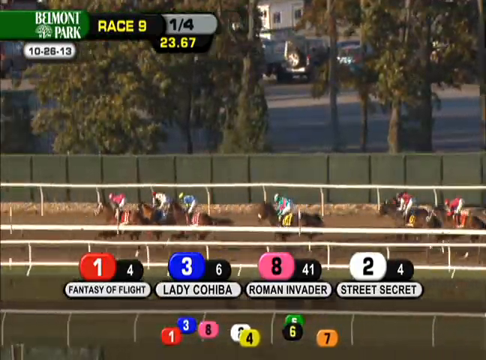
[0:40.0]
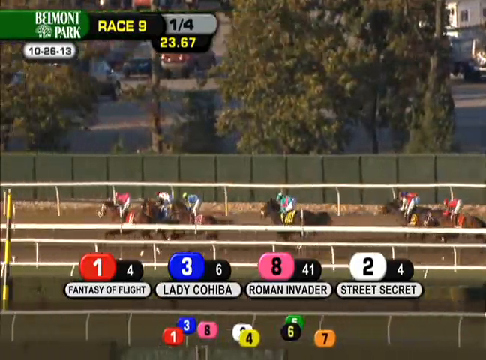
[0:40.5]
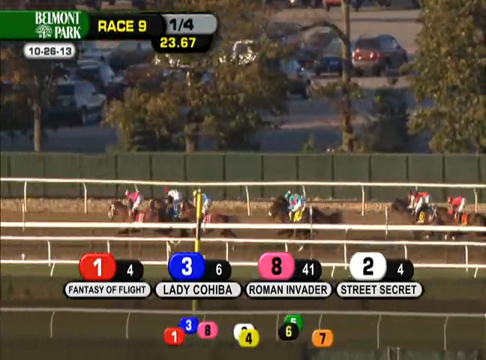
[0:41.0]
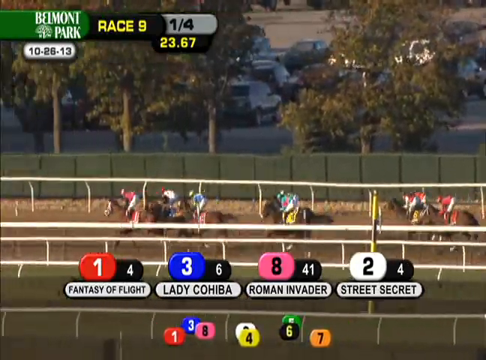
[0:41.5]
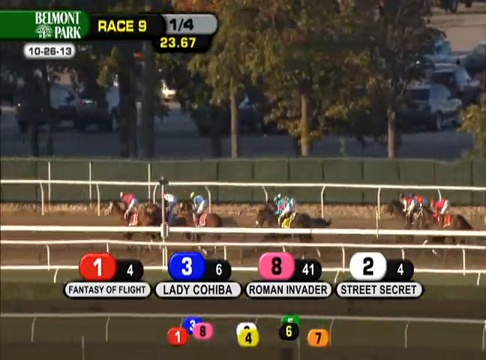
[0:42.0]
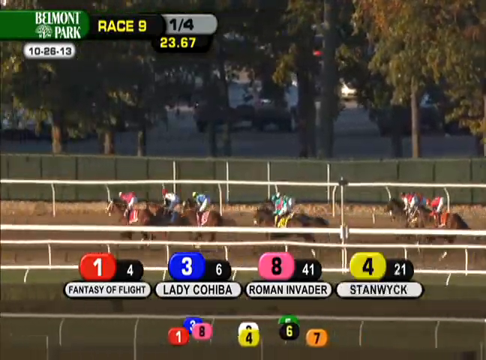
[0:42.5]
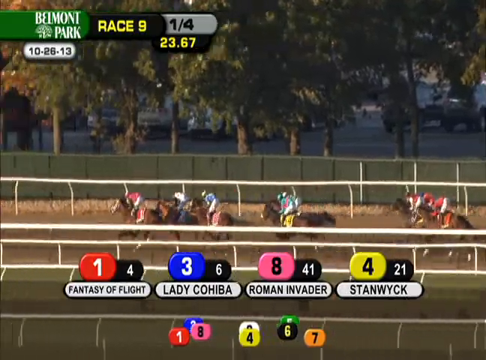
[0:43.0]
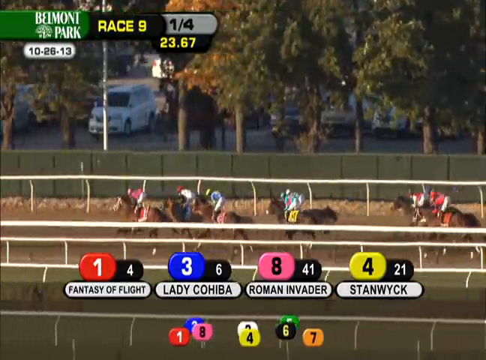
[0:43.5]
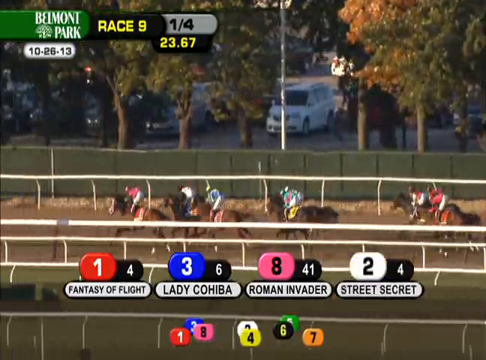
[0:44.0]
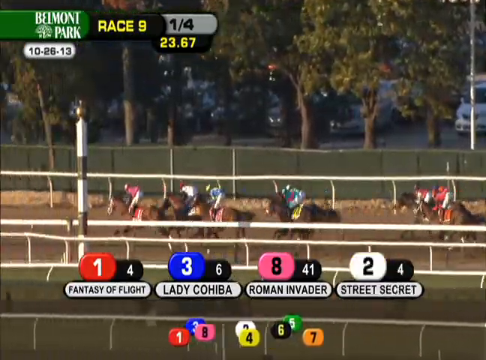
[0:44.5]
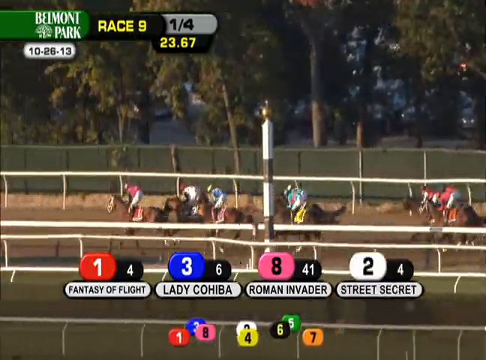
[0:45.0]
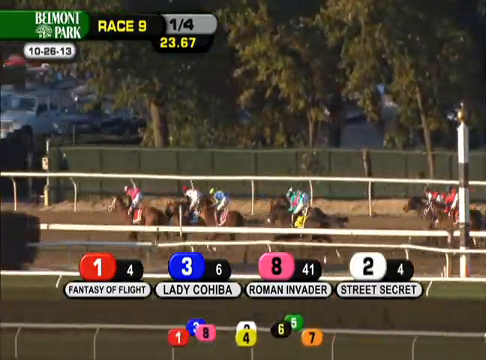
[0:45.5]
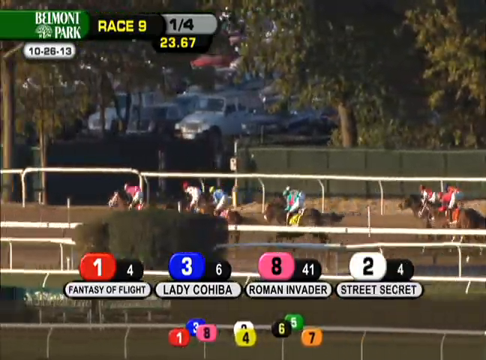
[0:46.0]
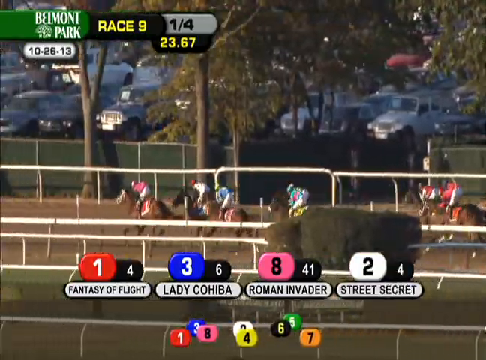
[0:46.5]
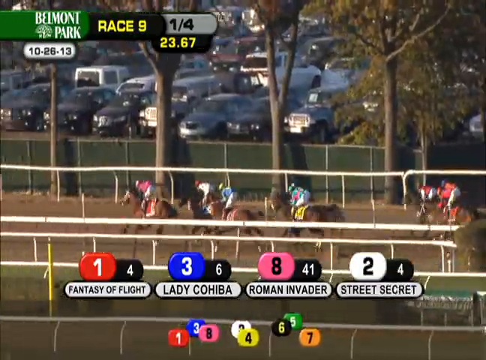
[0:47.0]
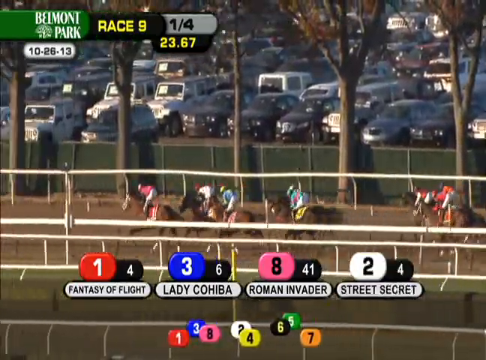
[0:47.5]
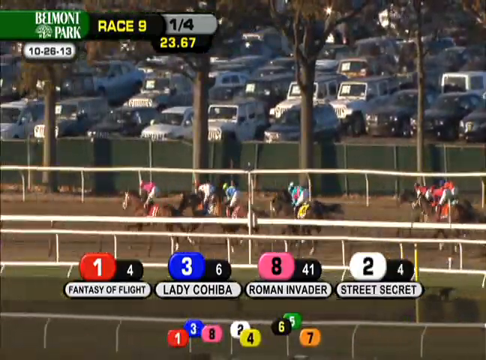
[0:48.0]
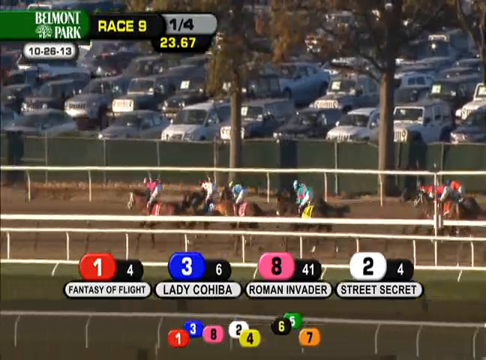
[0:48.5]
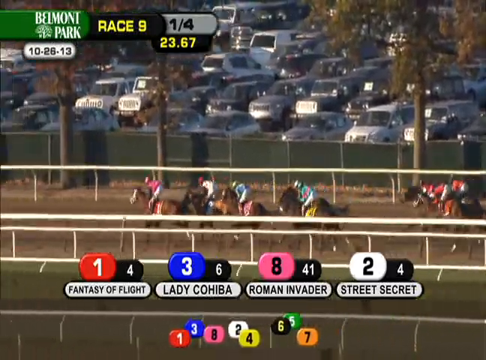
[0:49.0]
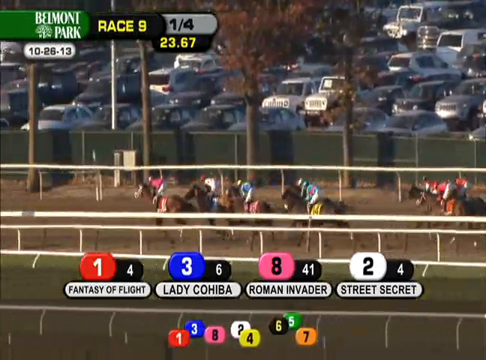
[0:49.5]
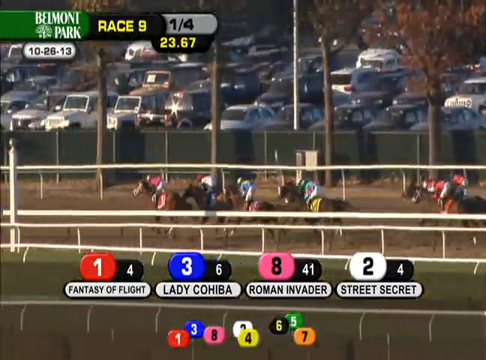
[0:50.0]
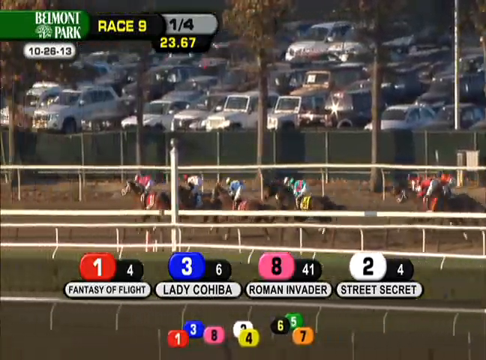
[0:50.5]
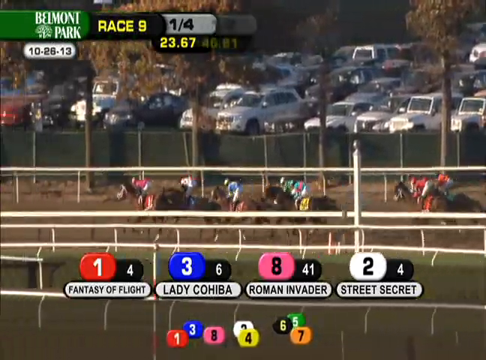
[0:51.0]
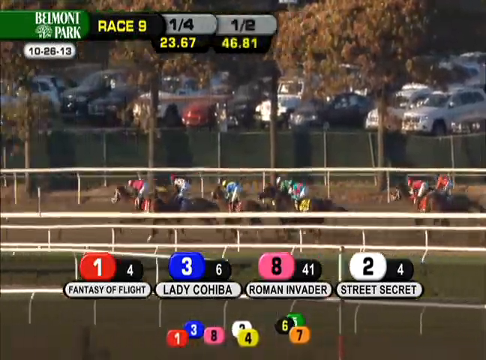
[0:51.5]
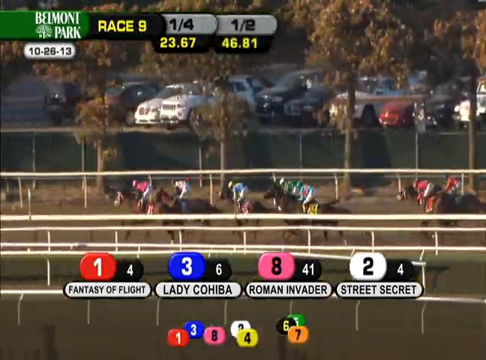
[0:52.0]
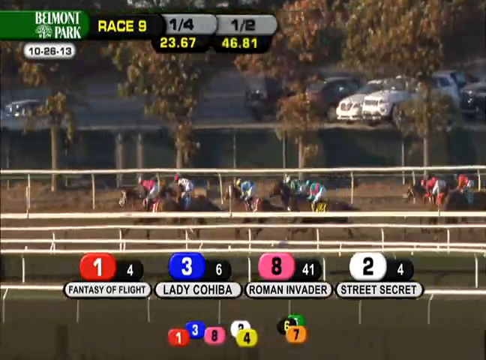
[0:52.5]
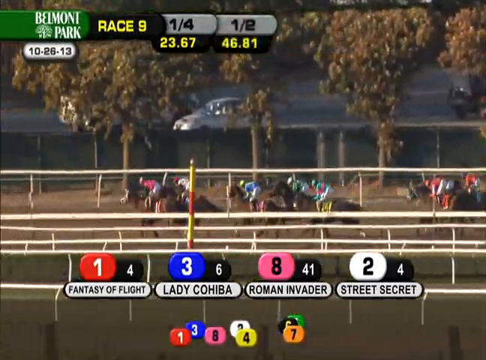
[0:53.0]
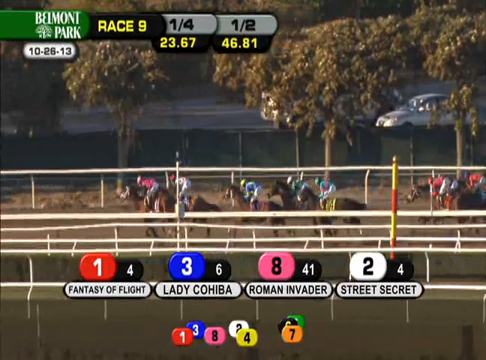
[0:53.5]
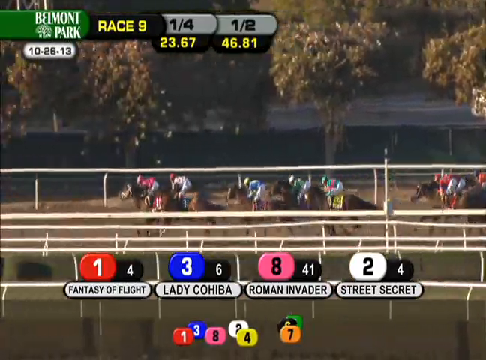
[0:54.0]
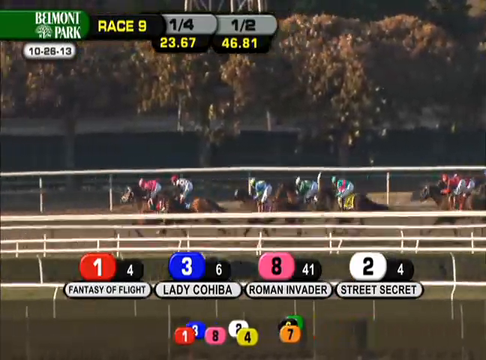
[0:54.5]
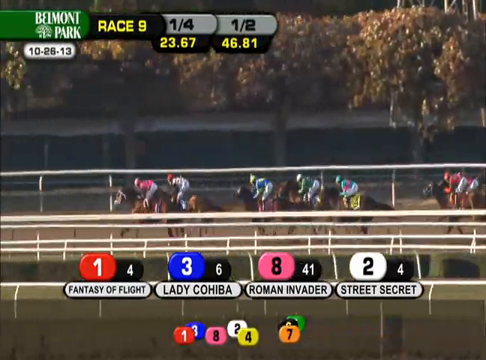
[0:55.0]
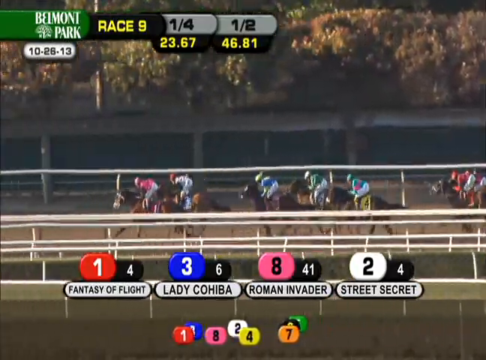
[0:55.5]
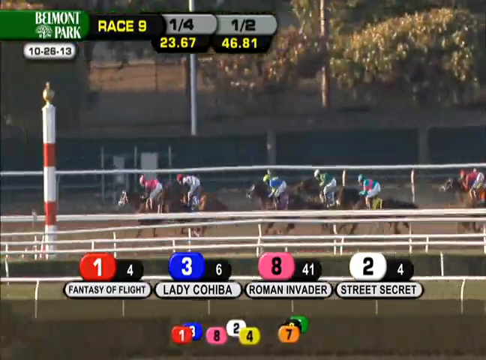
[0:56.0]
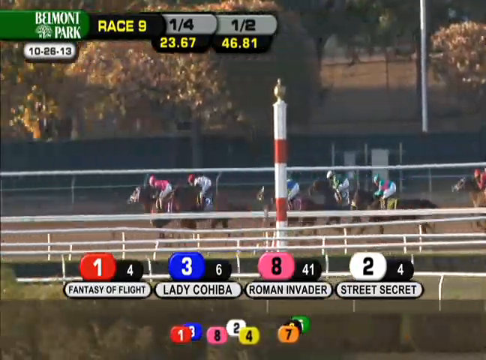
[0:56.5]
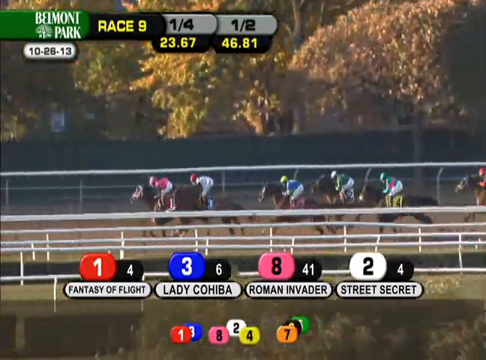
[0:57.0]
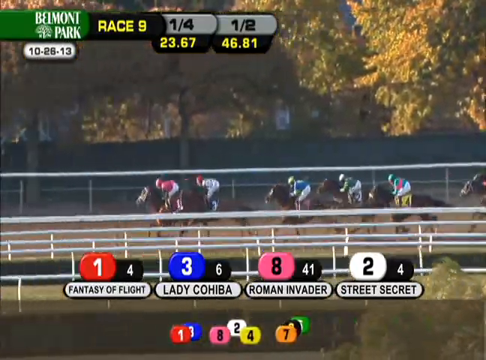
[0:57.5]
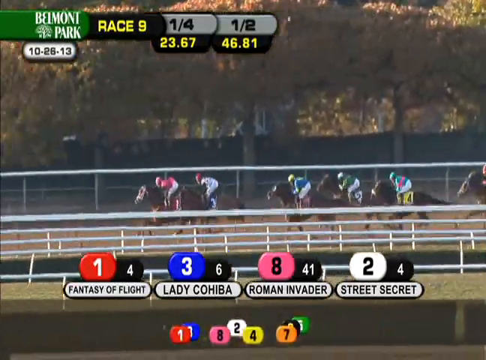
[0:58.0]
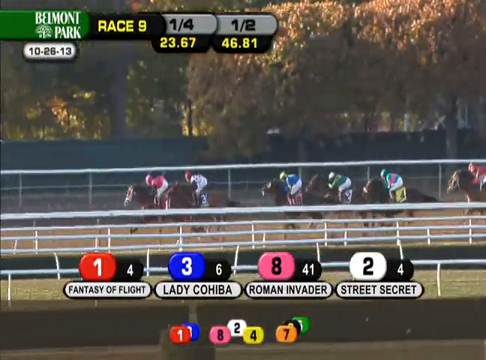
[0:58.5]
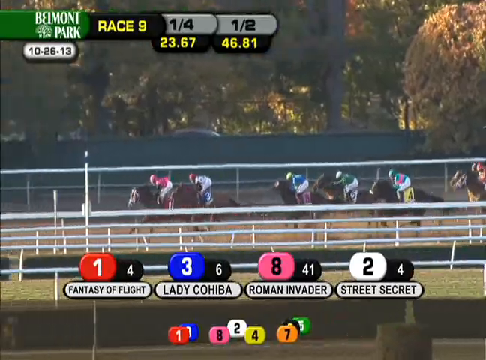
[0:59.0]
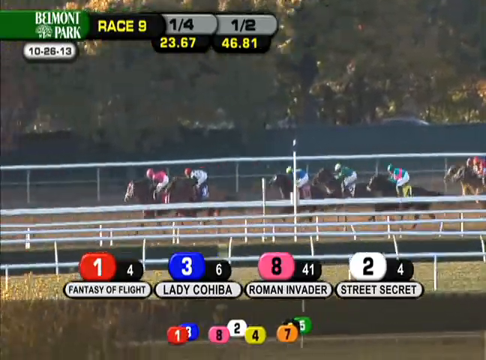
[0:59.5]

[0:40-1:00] A horse race is underway. Several horses, each ridden by a jockey on its back, race down the track in a straight line. At the top left of the screen are several text indicators: a logo for Belmont Park, the venue; a text indicator that says "Race 9", indicating the ninth race of the day; another that says "1 4th 23.67"; and the date, October 26, 2013. Indicators at the bottom of the screen show numbers and the names of several horses: number 1, Fantasy of Flight; number 3, Lady Cohiba; number 8, Roman Invader; and number 2, Street Secret. Eight other numbers, 1 through 8, appear at the bottom of the screen, moving back and forth to indicate the horses' relative positions in real time. The horses are clustered very close together as they run straight down the track. Behind the racetrack is a large parking lot with various cars parked, along with trees, fields, and fences. Fantasy of Flight, number 1, is ahead of the pack.